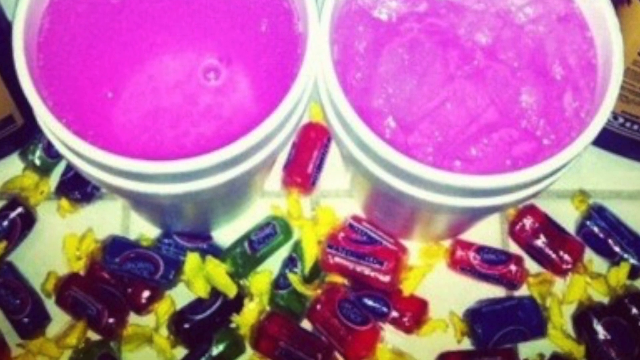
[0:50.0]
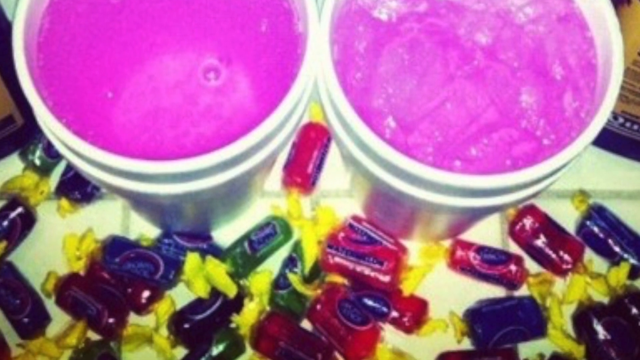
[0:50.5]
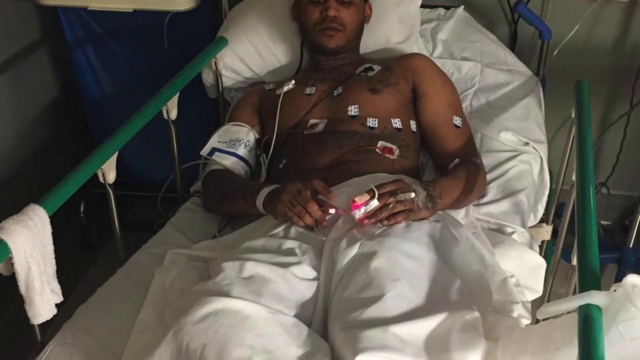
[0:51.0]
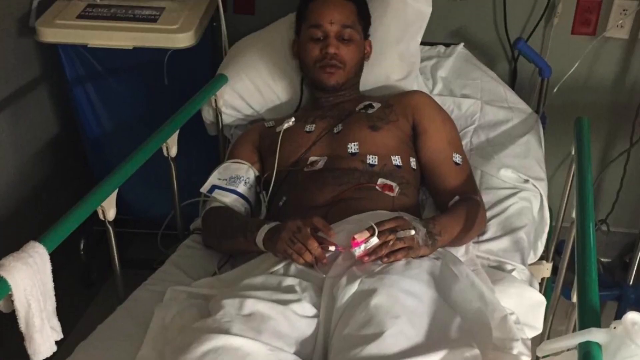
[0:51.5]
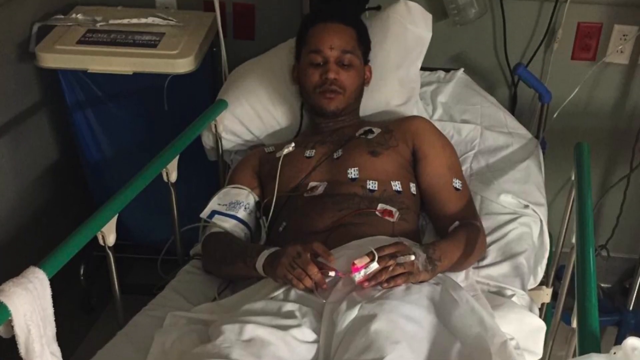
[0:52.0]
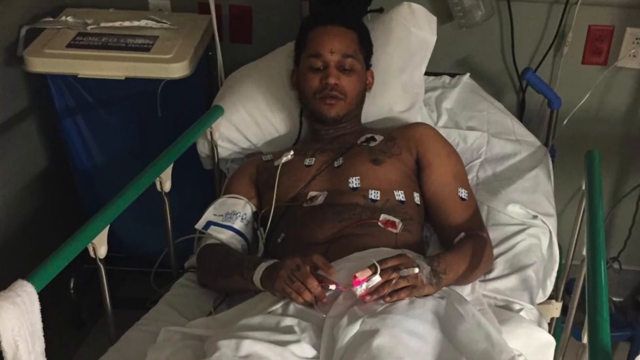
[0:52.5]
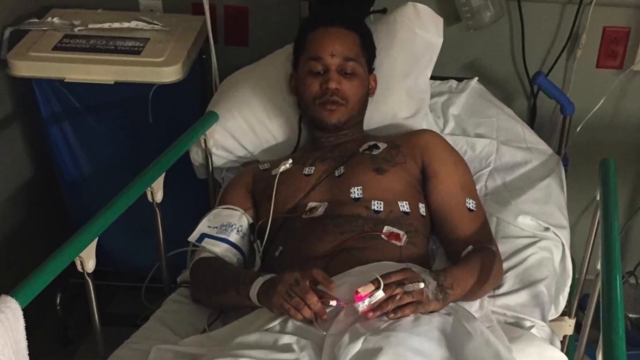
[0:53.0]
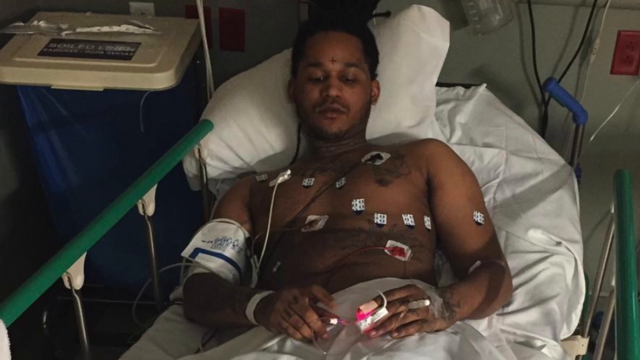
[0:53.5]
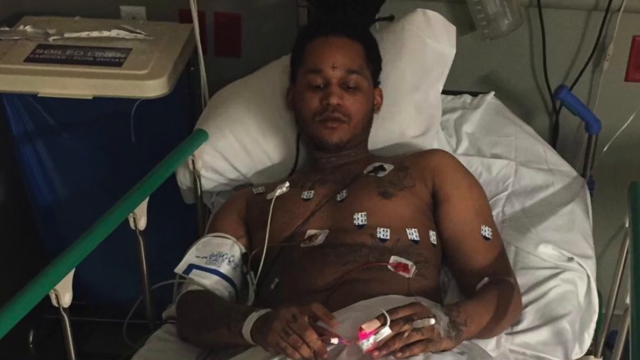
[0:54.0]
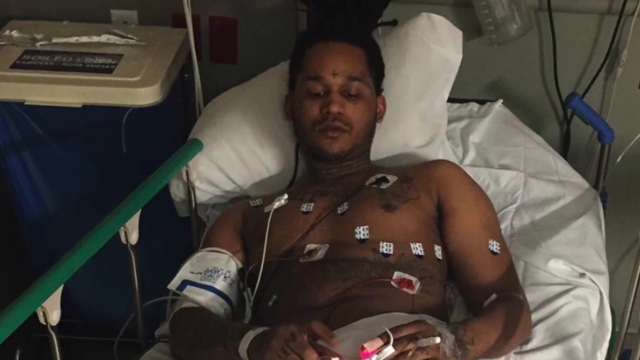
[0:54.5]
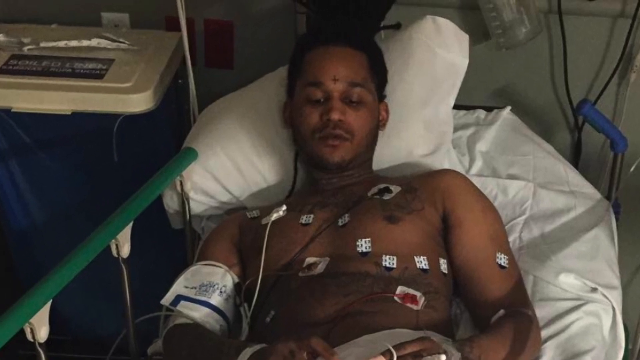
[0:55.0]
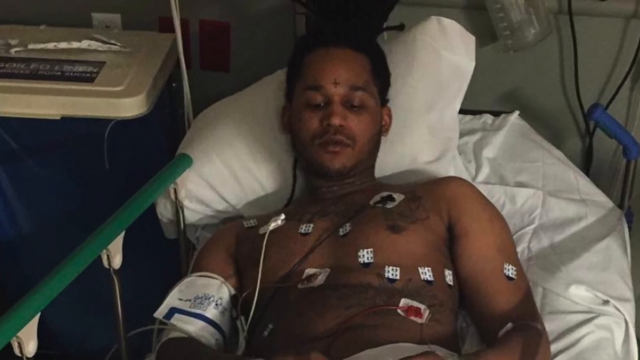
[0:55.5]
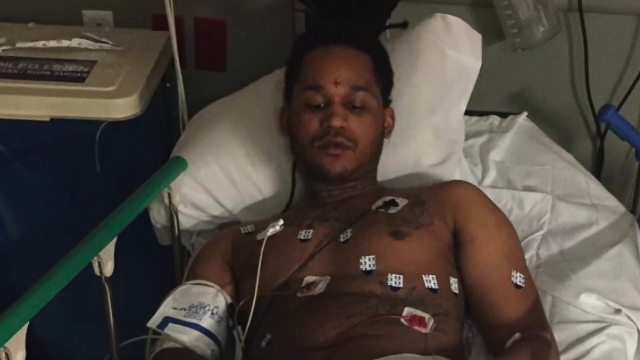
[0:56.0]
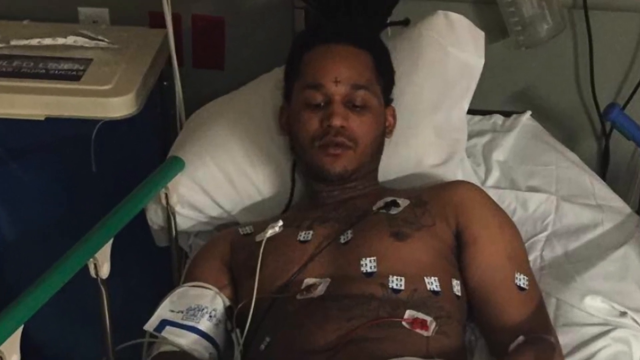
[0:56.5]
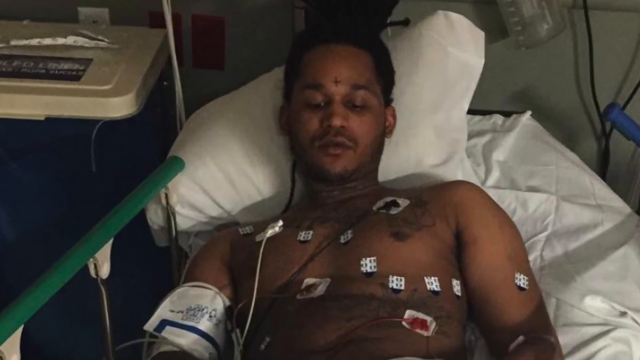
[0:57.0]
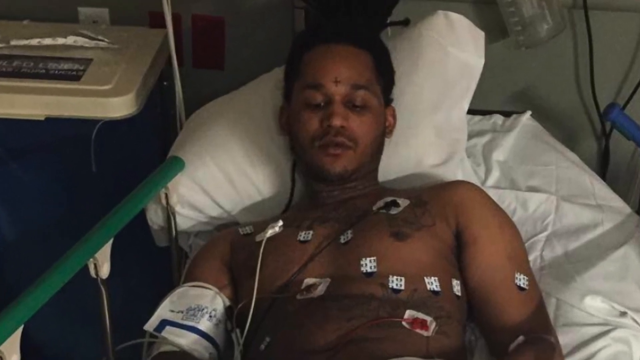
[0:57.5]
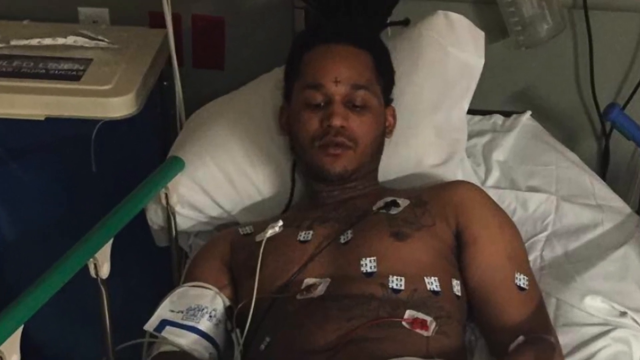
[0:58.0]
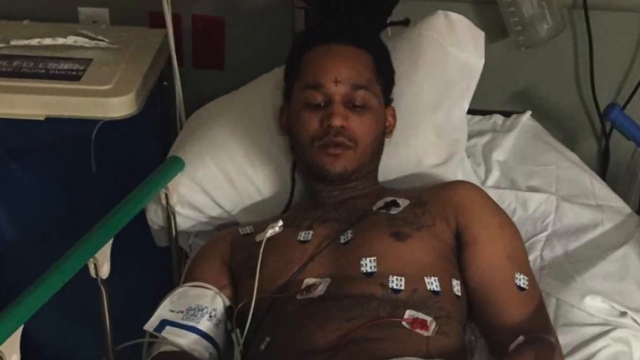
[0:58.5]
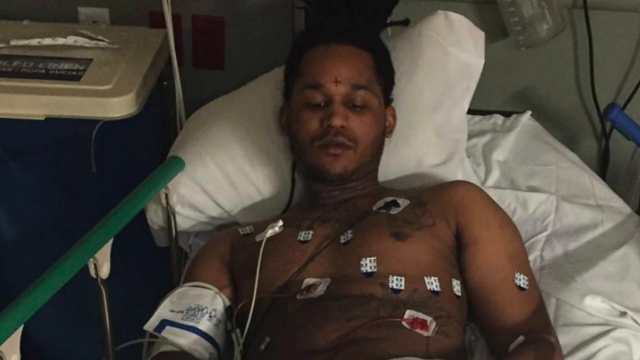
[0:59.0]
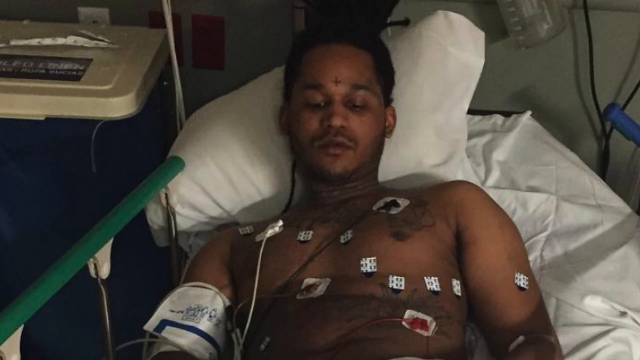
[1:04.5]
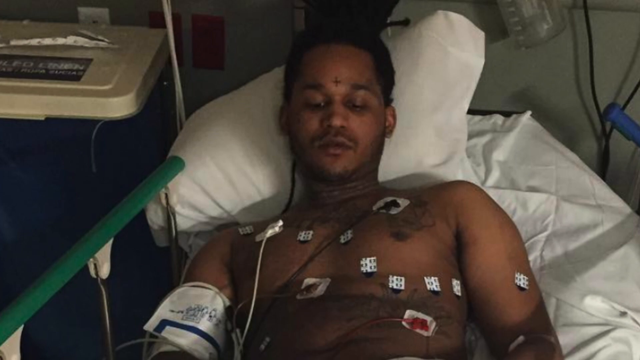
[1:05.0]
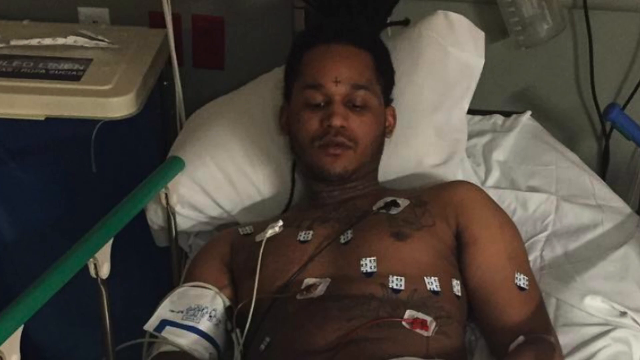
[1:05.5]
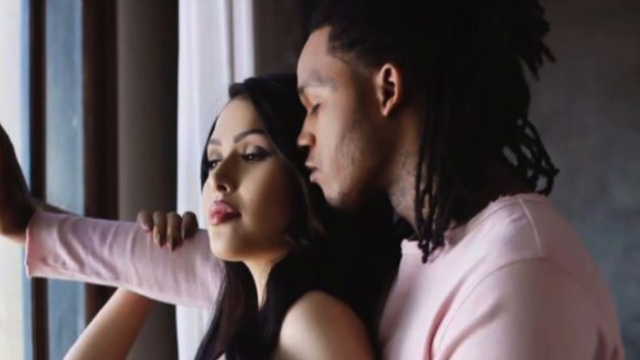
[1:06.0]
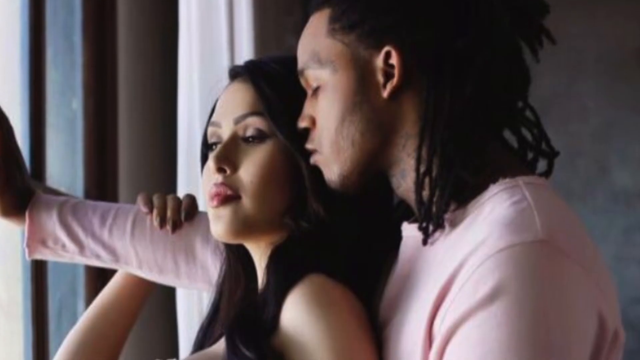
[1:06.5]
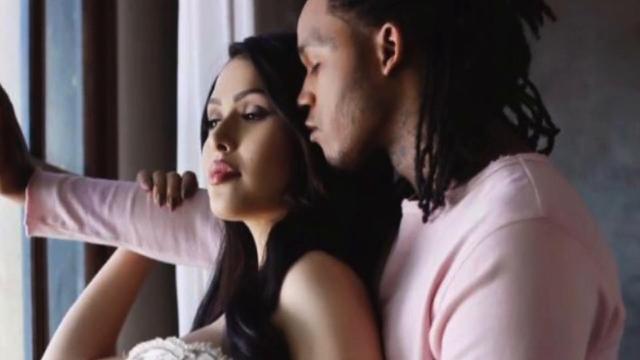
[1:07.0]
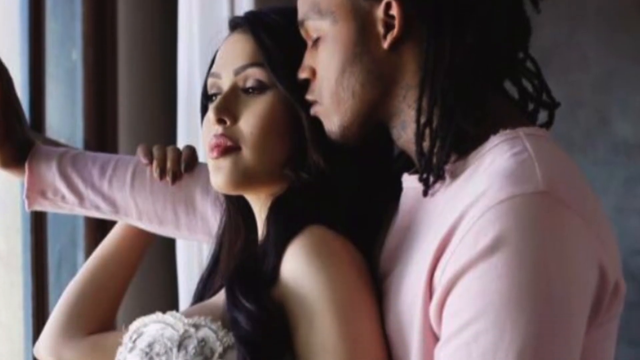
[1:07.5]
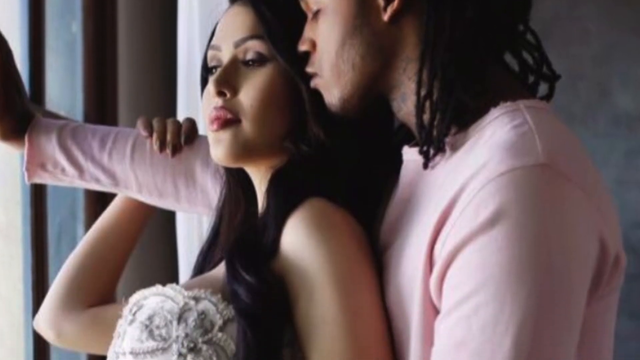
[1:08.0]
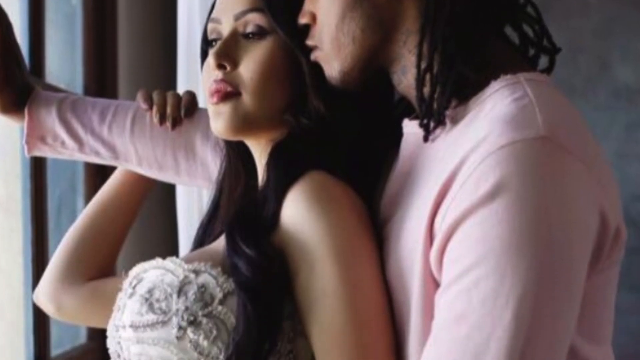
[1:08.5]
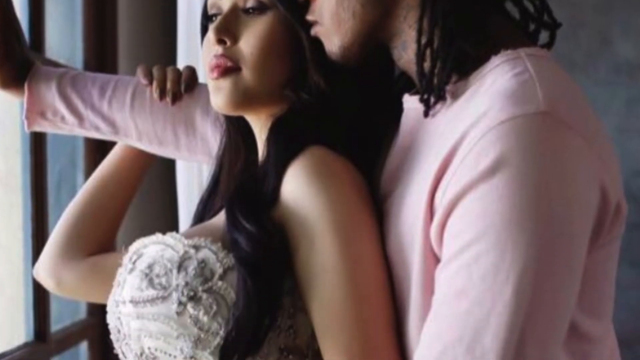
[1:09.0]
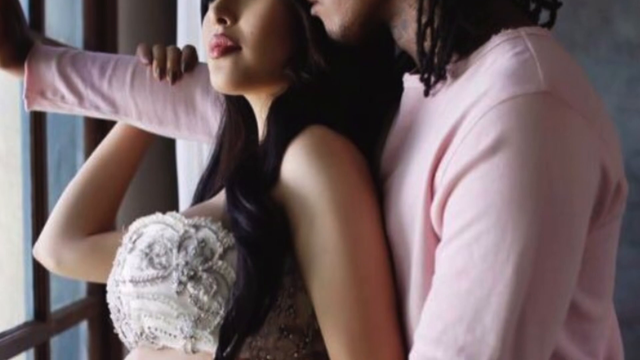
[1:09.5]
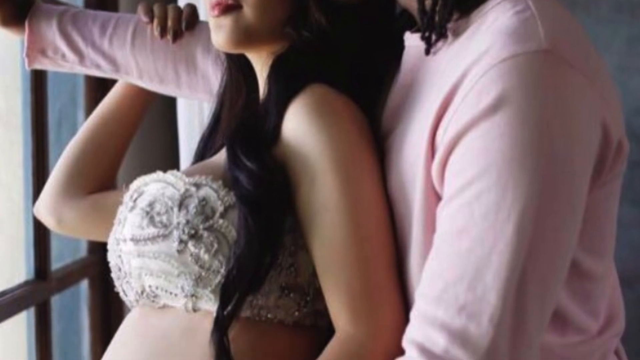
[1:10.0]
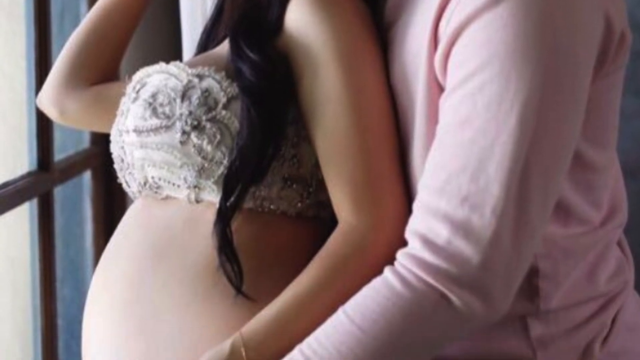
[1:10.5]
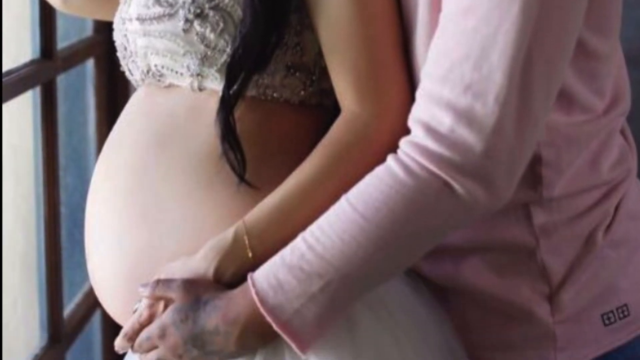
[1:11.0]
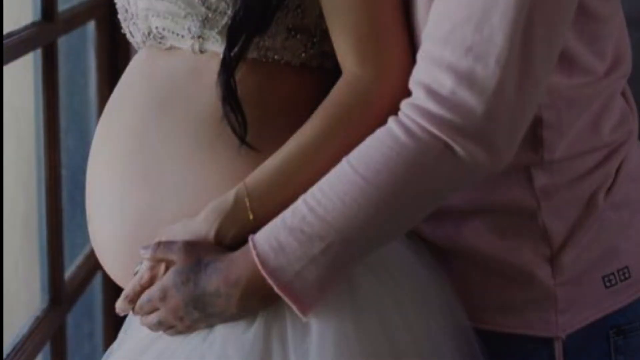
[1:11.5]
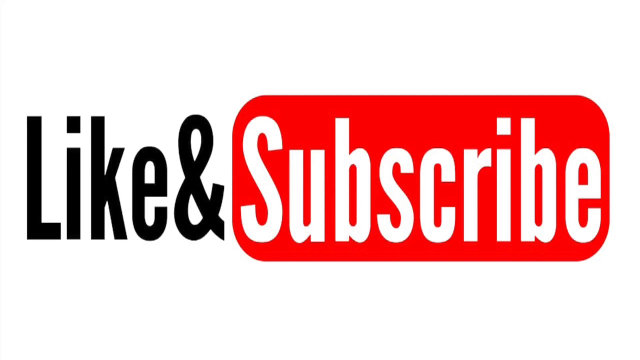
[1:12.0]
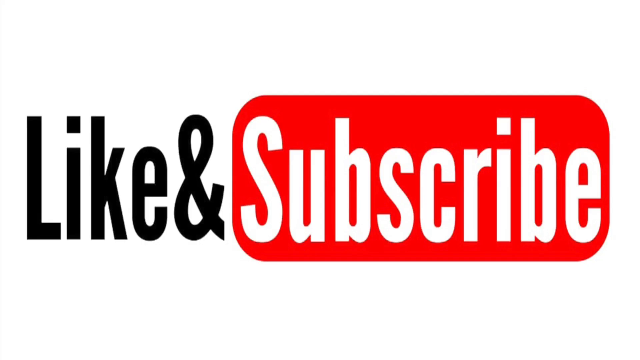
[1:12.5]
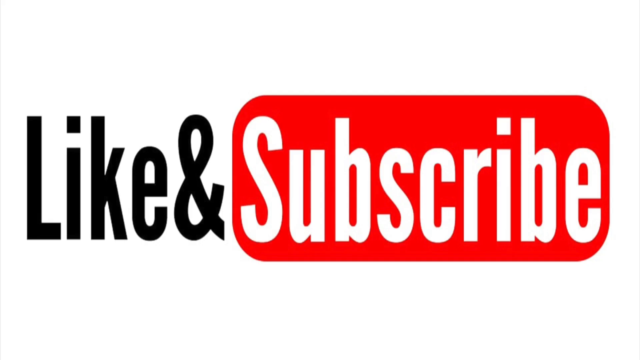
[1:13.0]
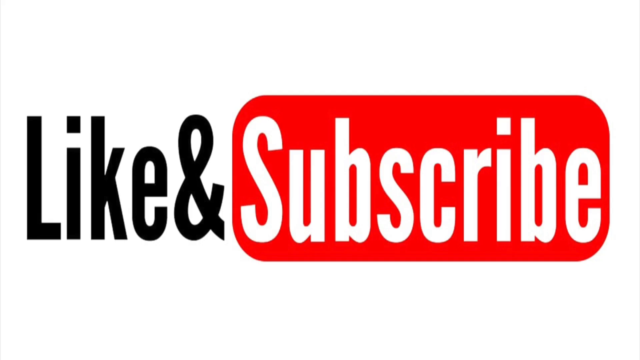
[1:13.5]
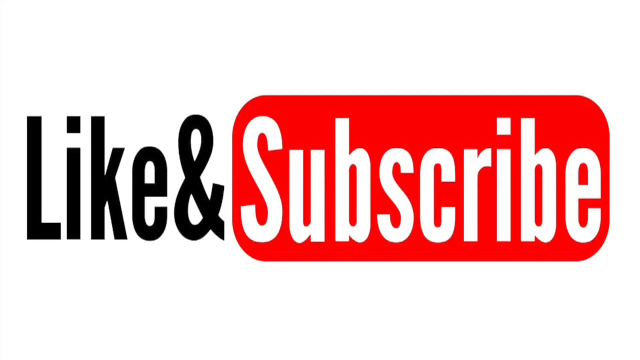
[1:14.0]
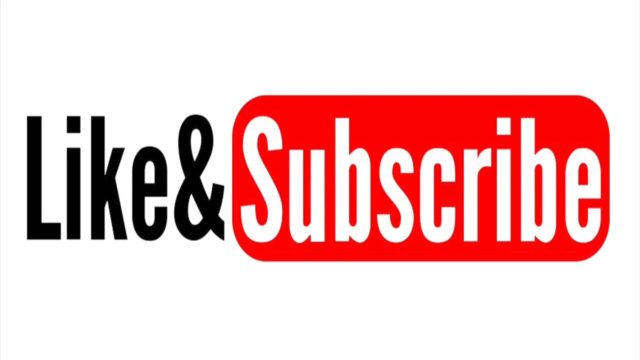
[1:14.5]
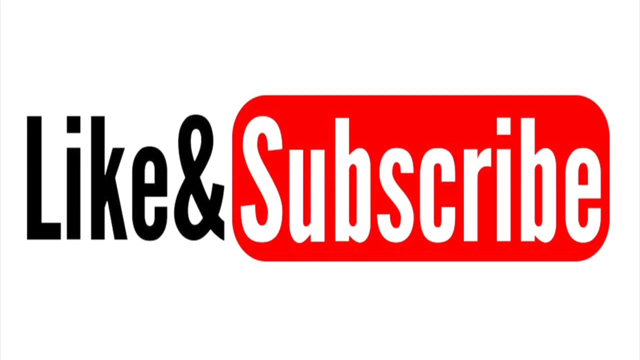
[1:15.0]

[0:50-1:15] The shot zooms in on a man in a hospital bed who has kind of white little stickers on him and a white and blue cuff around his right arm. The rails of the bed are sort of green, and to his left is a sort of wastebasket that is blue with a white lid. The zoom moves in on his face; he is kind of looking down and has a cross on his forehead. The scene then moves to another shot of a man with dreads, apparently the same man, seen kind of in profile, wearing a kind of pink long-sleeve shirt, with his eyes closed. He is next to a woman and is kind of holding on to her. The woman has long black hair, is kind of looking out to the left, and wears a sort of flowery bra with her belly shown; she is pregnant. She and the man both have their hands kind of around her belly area. They are both in front of a window on the left.